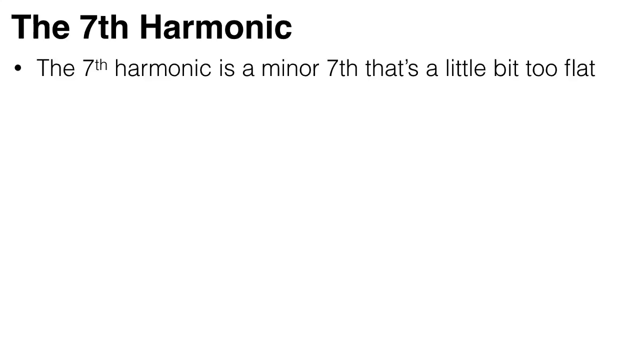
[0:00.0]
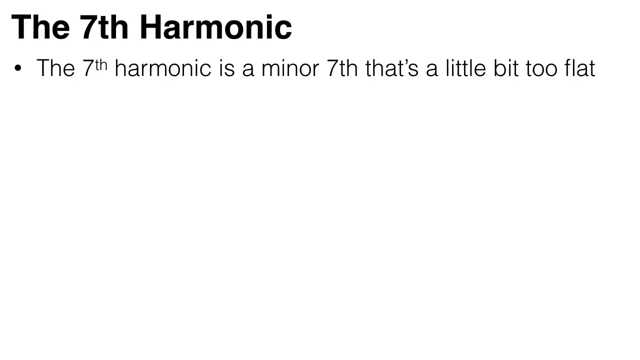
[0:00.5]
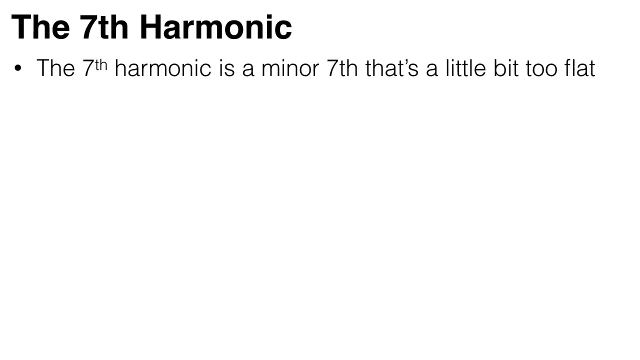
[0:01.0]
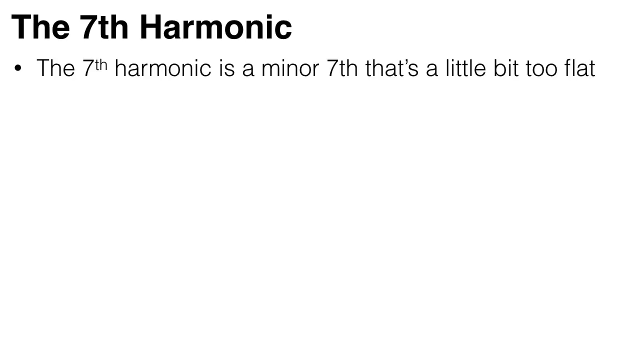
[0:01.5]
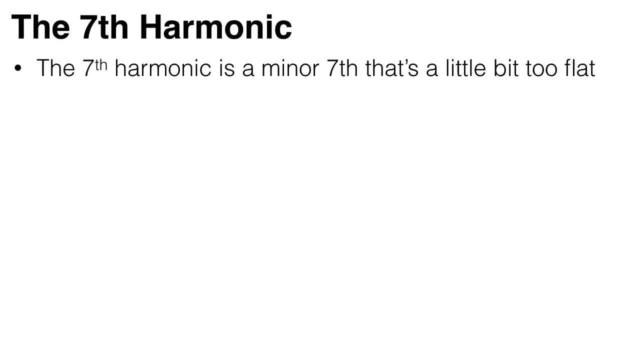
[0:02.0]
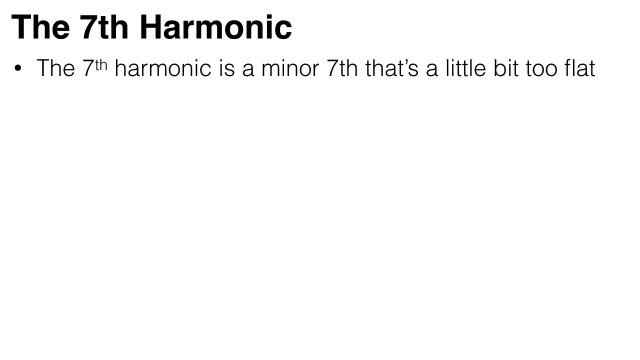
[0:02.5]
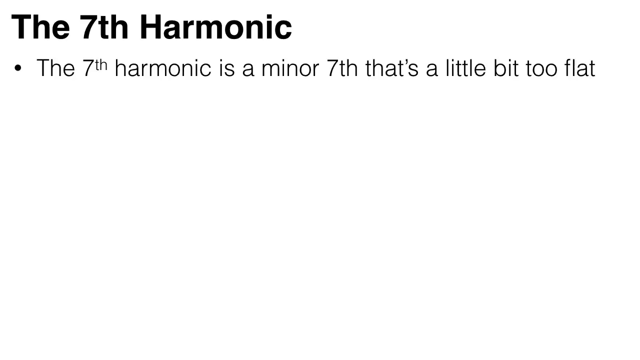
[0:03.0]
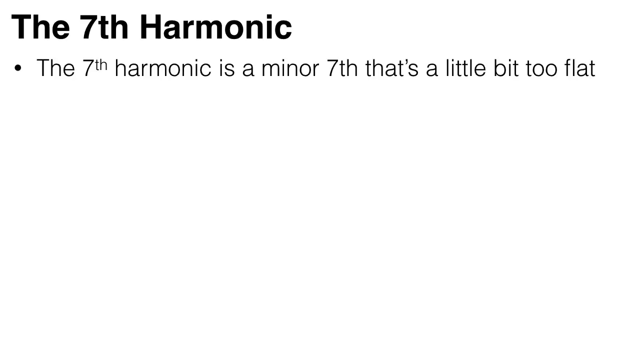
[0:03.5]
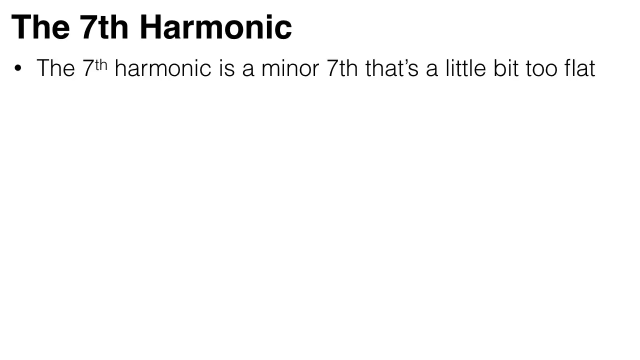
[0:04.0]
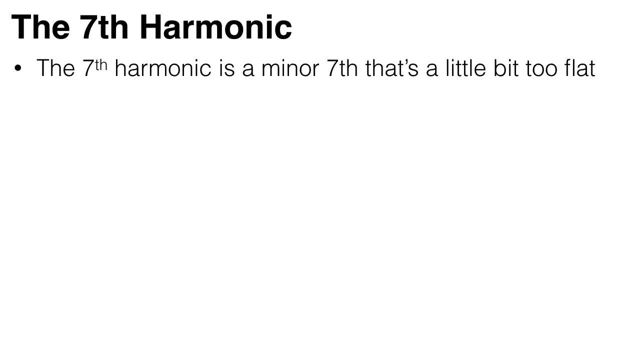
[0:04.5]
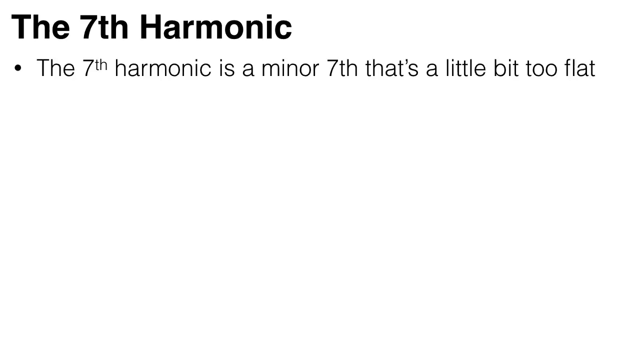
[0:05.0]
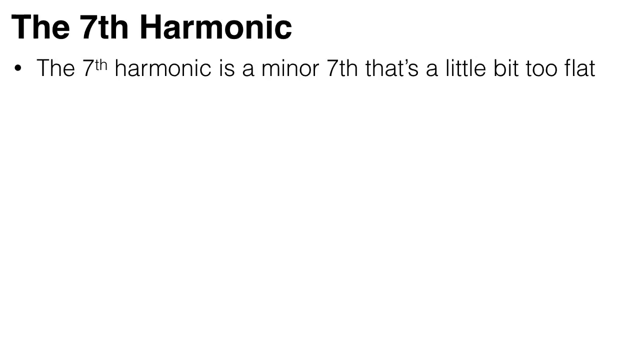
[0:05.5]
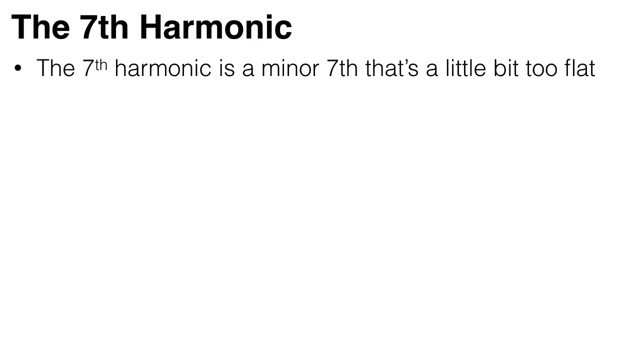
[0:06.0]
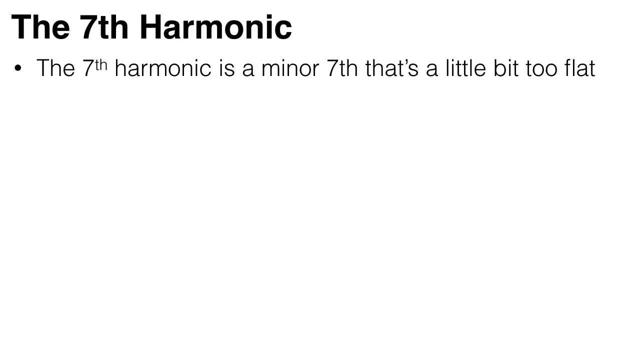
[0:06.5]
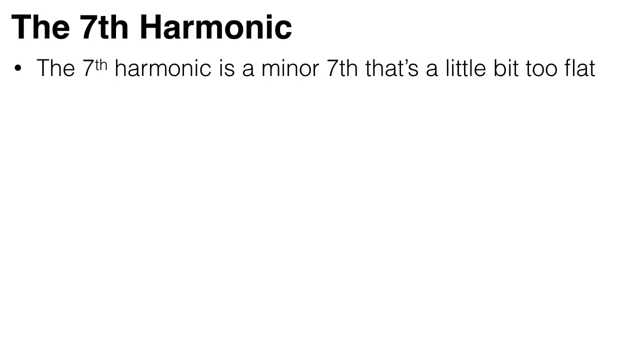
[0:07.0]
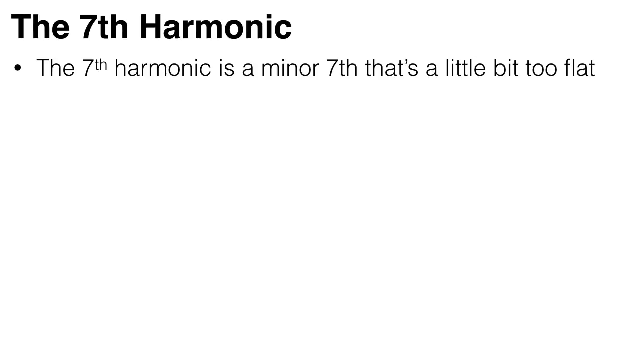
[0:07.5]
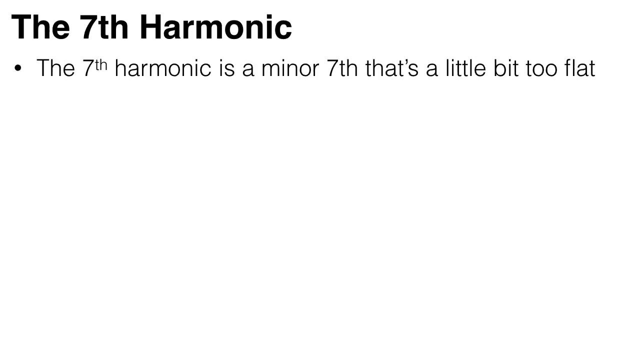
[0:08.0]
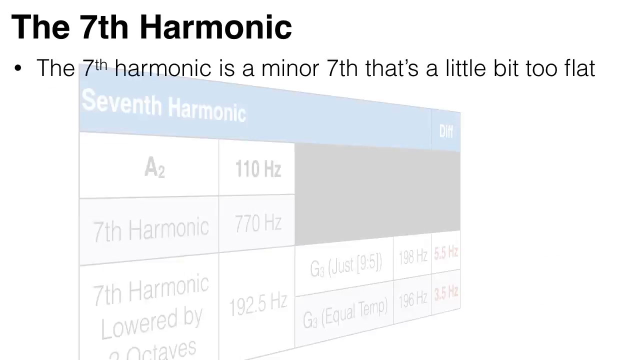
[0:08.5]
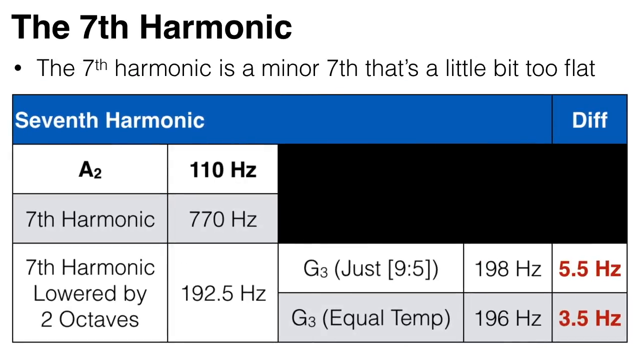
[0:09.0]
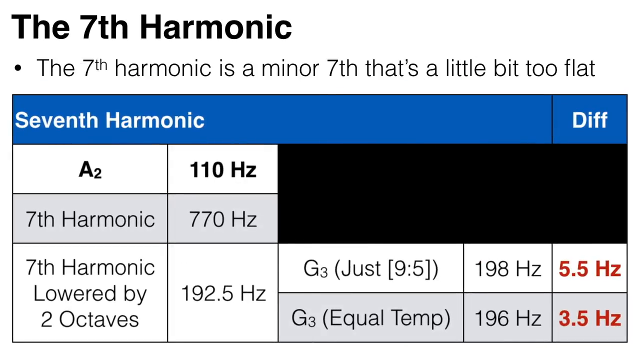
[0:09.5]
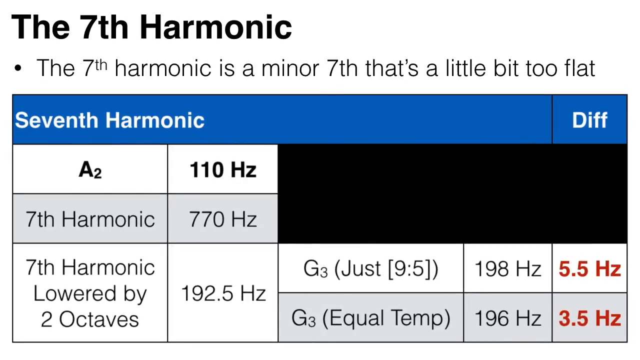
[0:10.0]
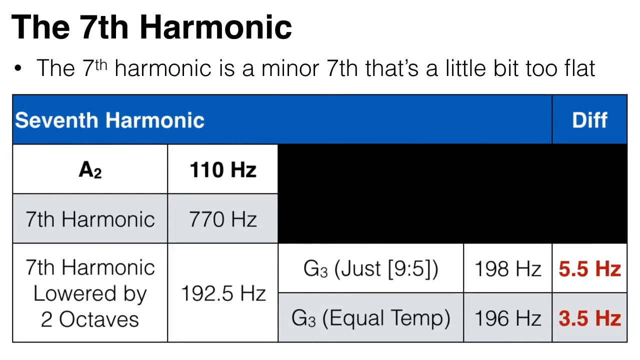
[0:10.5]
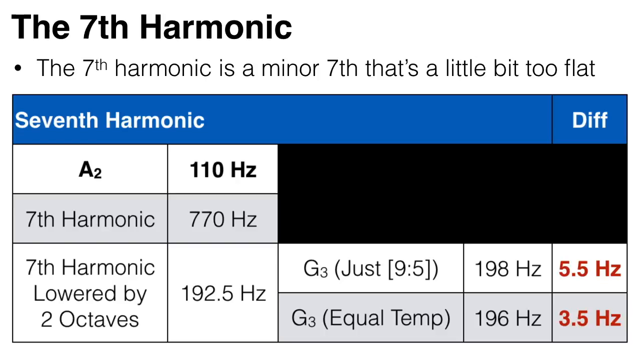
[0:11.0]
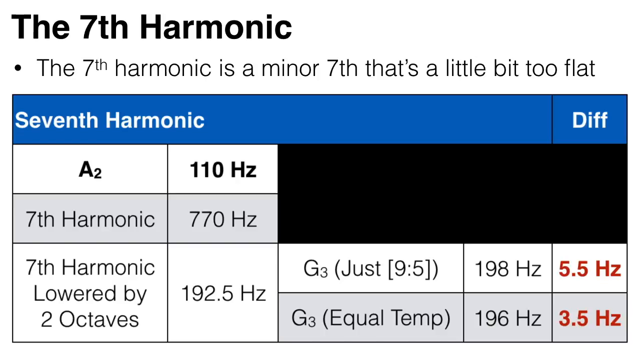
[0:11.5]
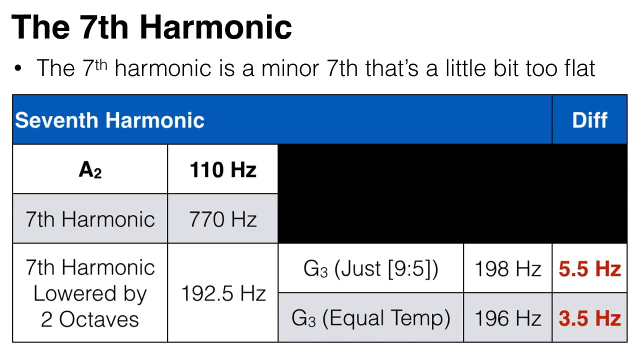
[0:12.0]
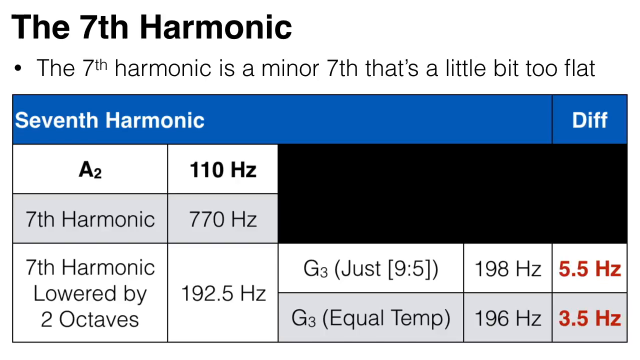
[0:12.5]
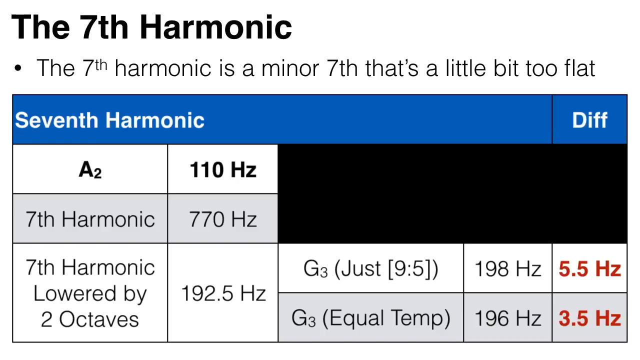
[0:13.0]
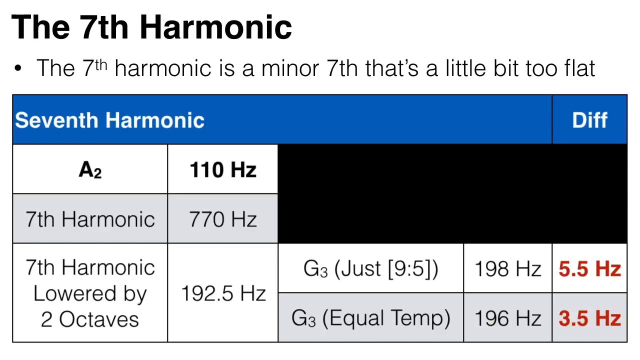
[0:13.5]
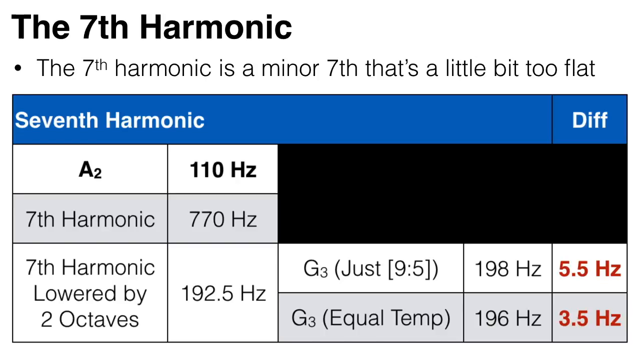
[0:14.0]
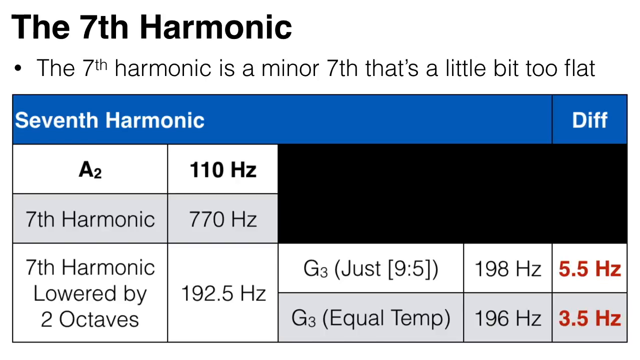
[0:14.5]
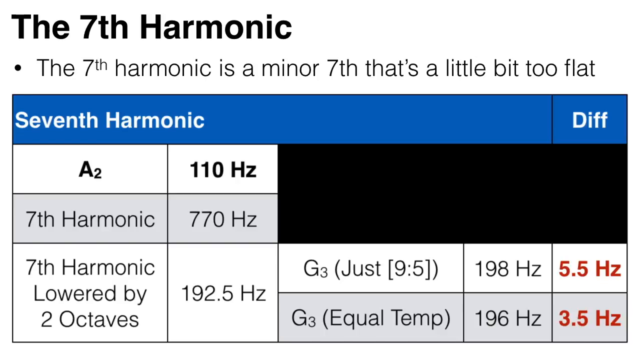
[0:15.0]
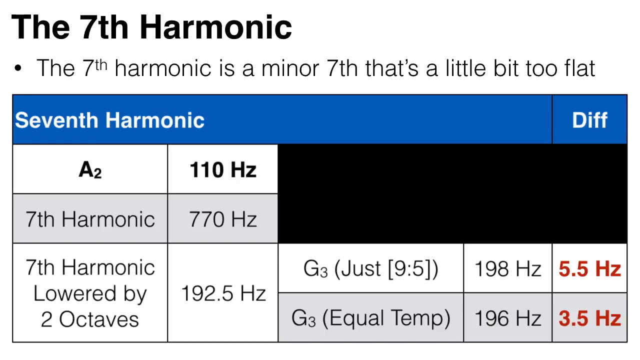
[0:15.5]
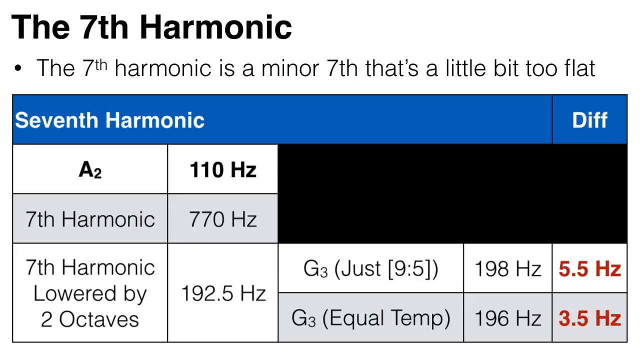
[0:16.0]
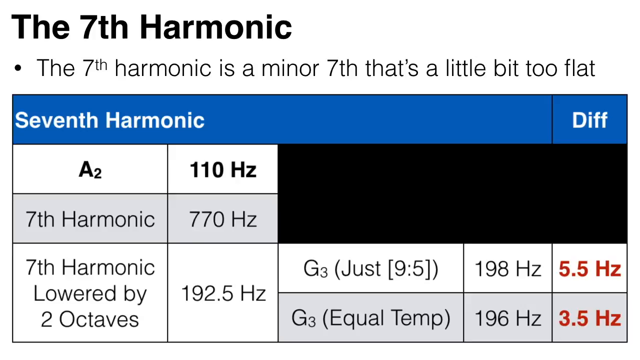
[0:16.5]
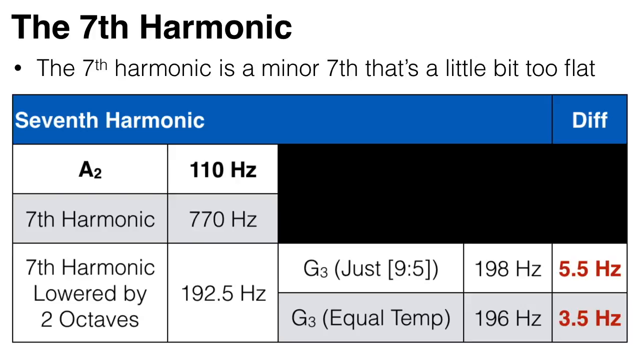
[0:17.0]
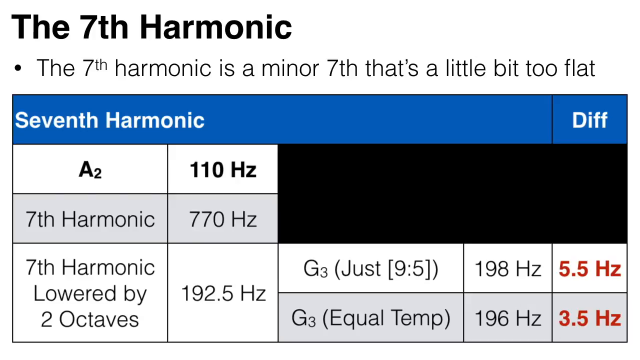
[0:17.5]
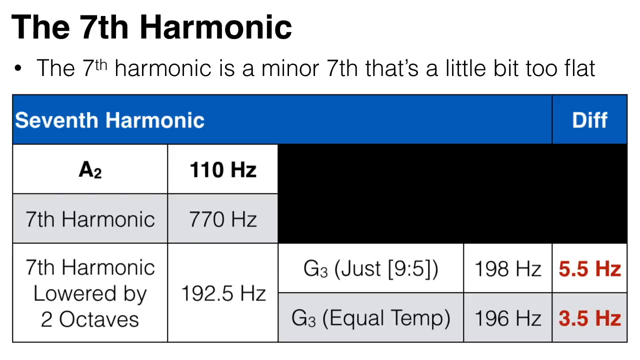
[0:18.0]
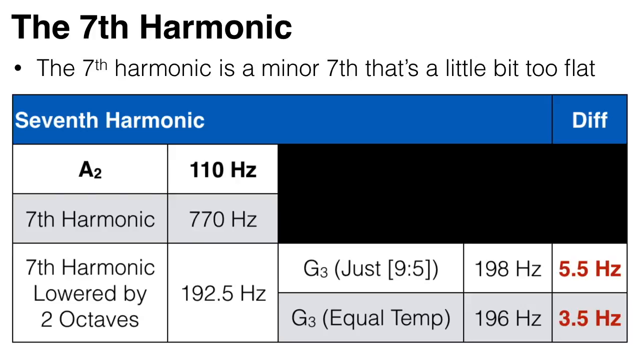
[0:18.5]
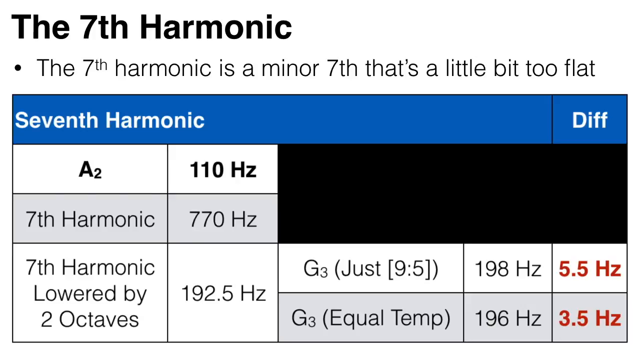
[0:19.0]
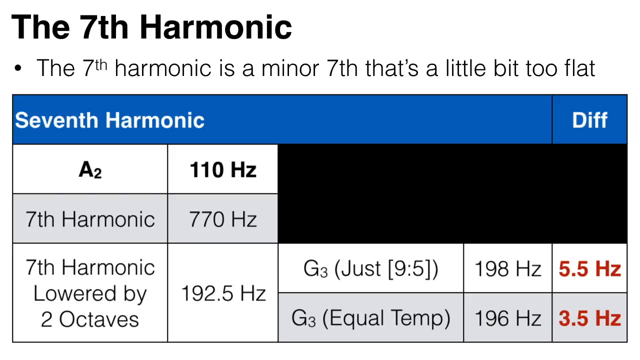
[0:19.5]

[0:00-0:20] The top of the first slide reads "the seventh harmonic" in large black font, left-justified. A bullet appears below it: "the seventh harmonic is a minor seventh that's a little bit too flat." Shortly after, a chart appears with "seventh harmonic" in a blue box and "diff" over to the right, with several columns below. The first row lists A2 with a small 2 beside the A, at 110 Hz; the next row says 7th harmonic, 770 Hz; the next says 7th harmonic lowered by 2 octaves, at 192.5 Hz. To the right are two subdivisions: G3 just 9 to 5 ratio is 198 Hz, with a highlighted difference of 5.5 Hz, and G3 equal temp is 196 Hz, with a difference of 5 Hz.